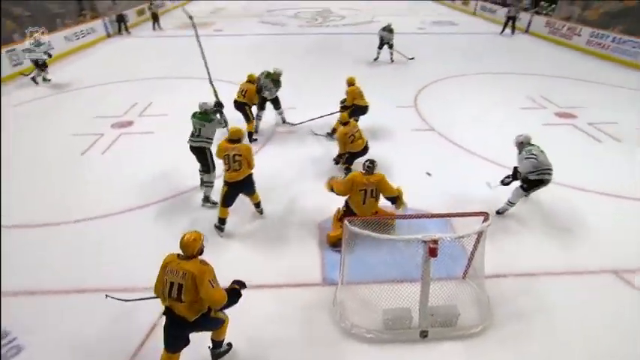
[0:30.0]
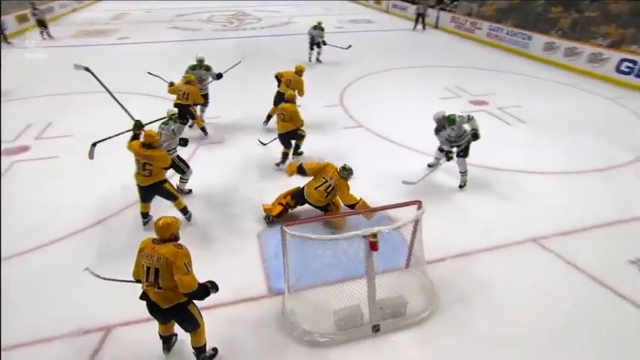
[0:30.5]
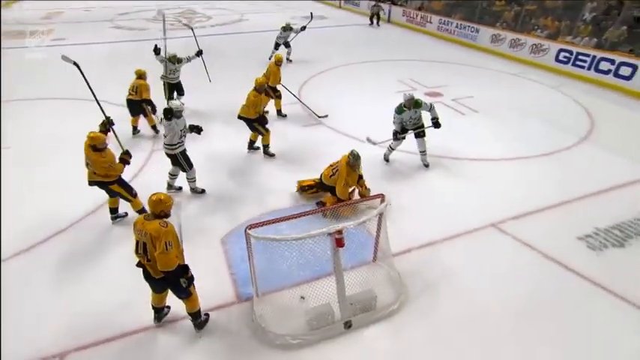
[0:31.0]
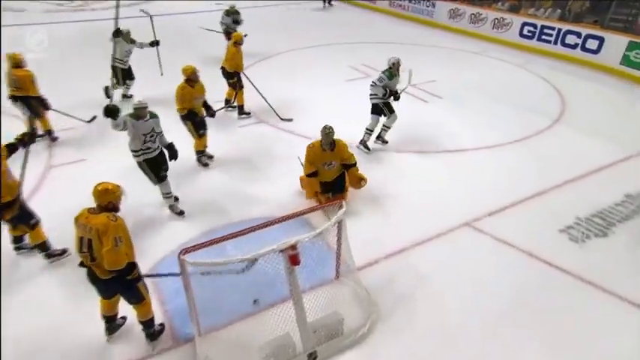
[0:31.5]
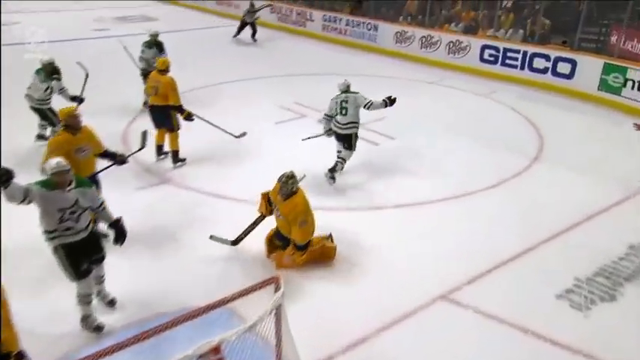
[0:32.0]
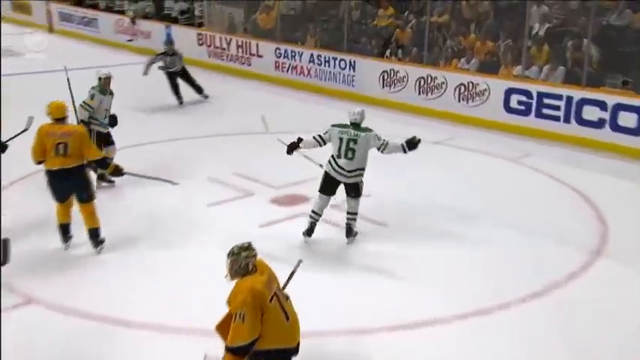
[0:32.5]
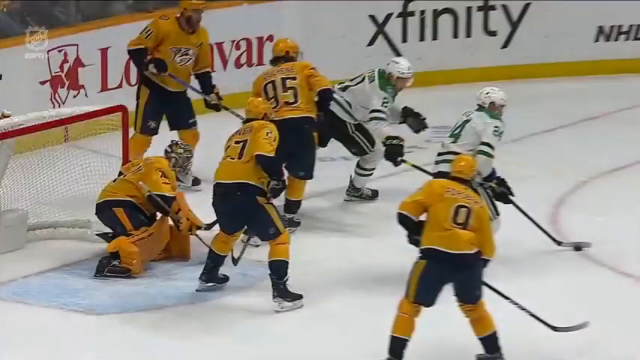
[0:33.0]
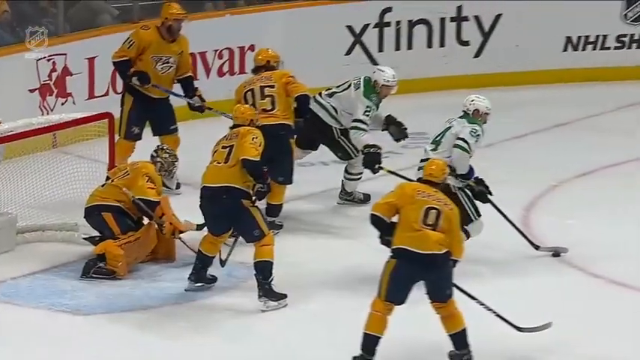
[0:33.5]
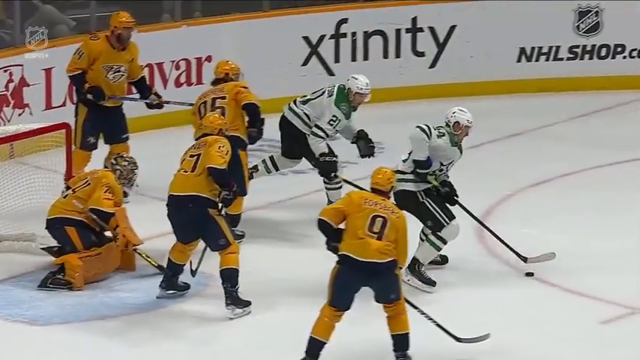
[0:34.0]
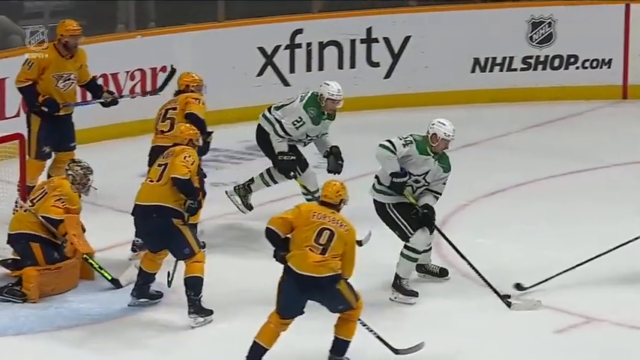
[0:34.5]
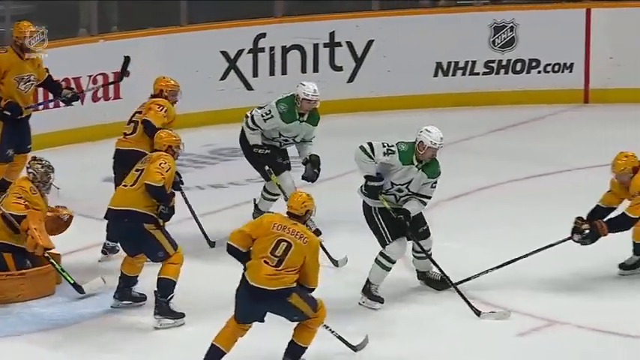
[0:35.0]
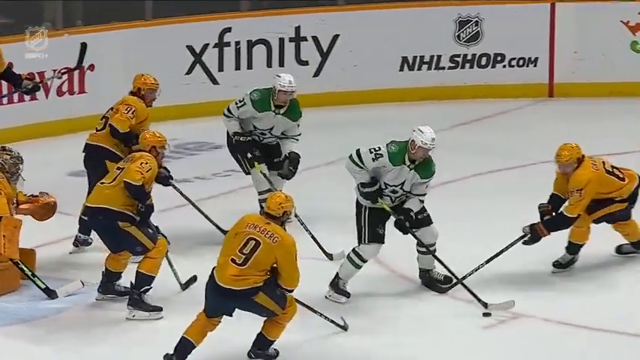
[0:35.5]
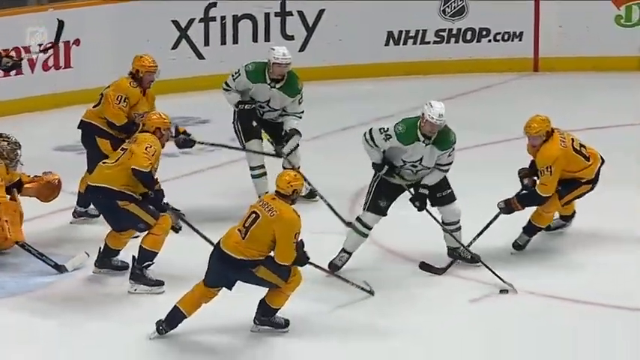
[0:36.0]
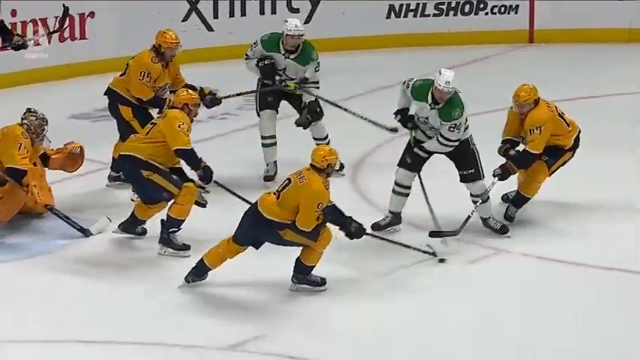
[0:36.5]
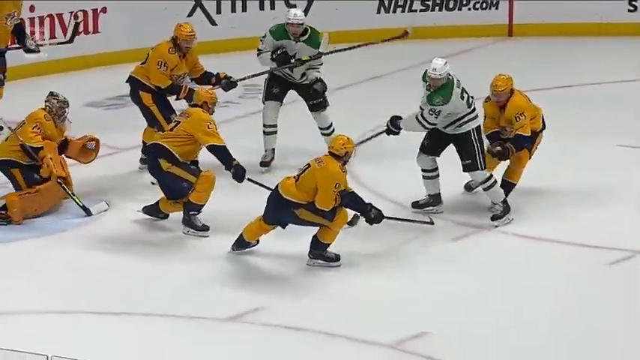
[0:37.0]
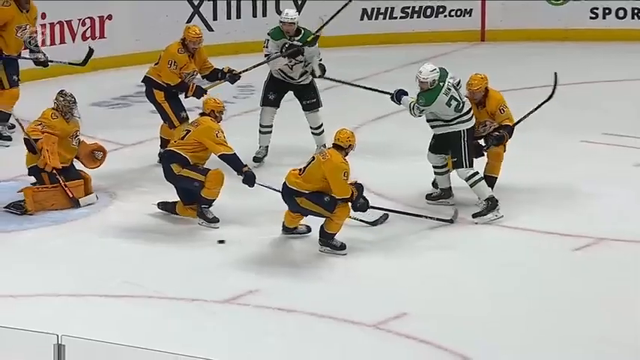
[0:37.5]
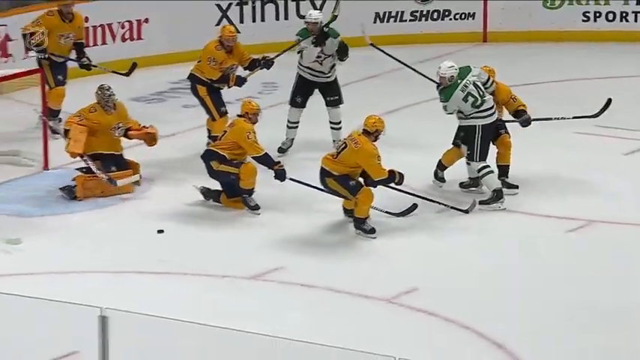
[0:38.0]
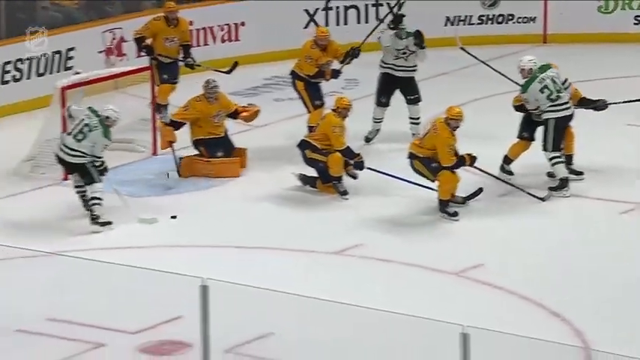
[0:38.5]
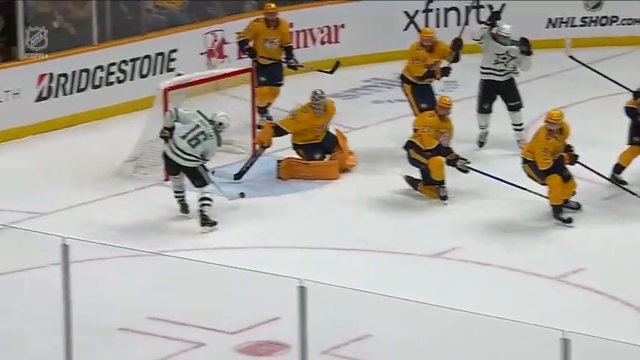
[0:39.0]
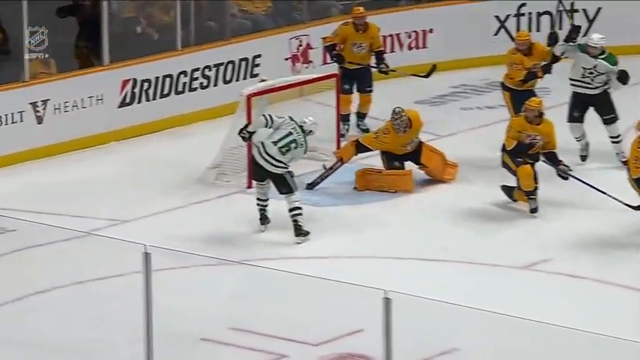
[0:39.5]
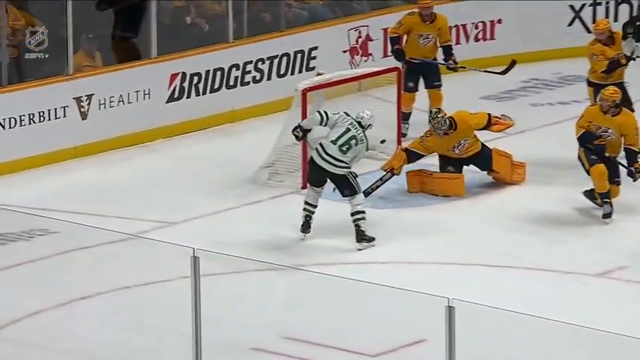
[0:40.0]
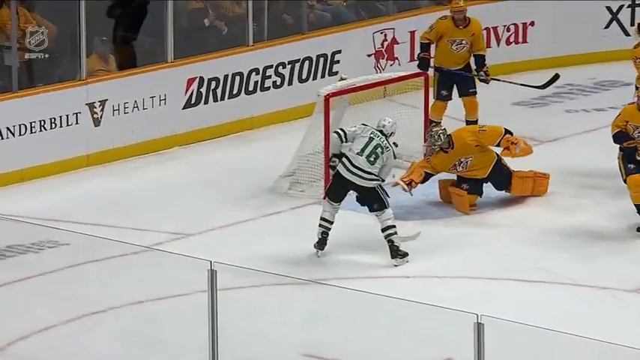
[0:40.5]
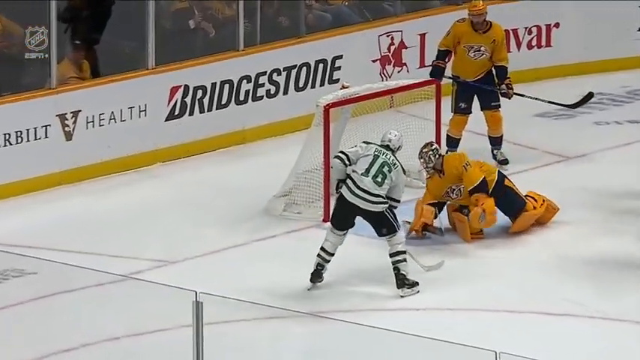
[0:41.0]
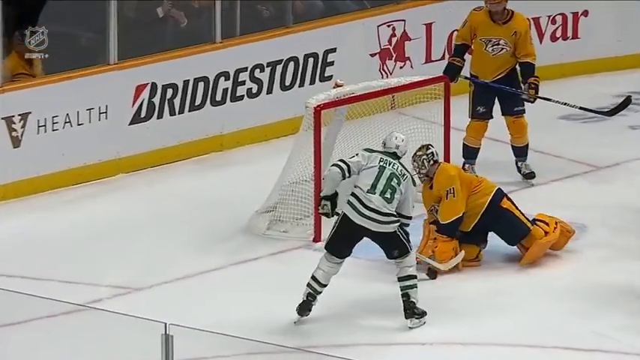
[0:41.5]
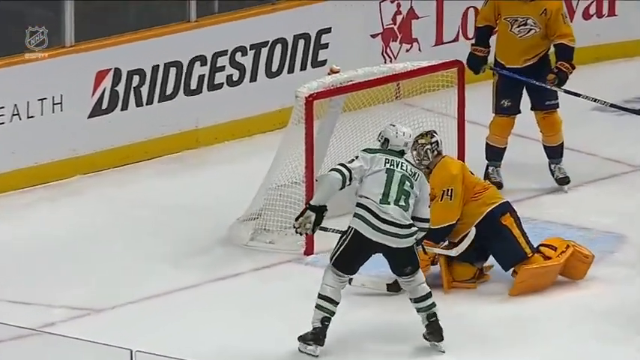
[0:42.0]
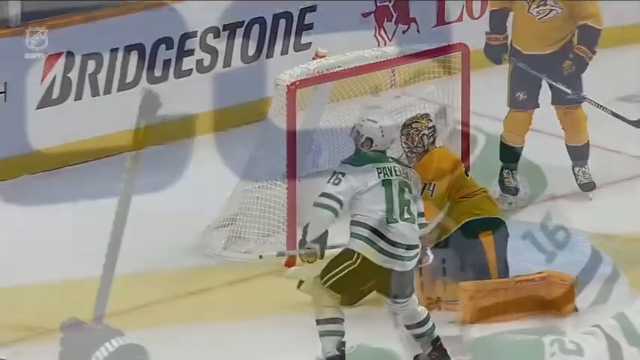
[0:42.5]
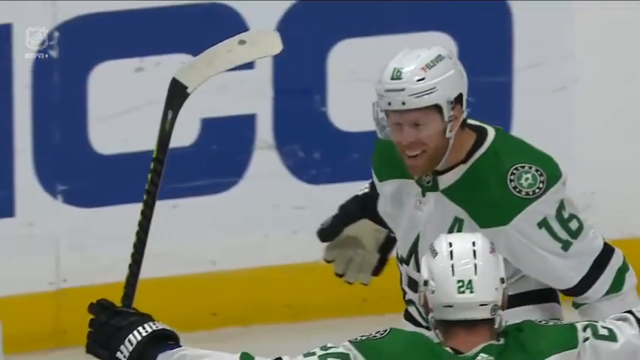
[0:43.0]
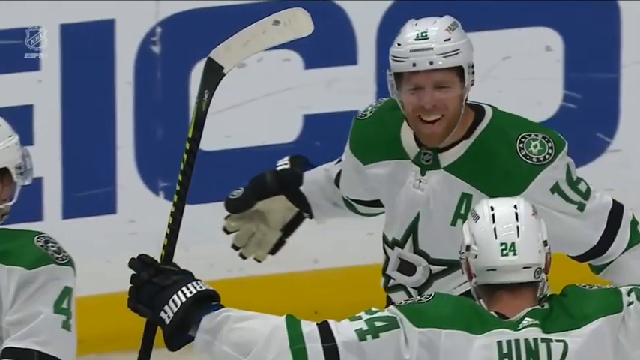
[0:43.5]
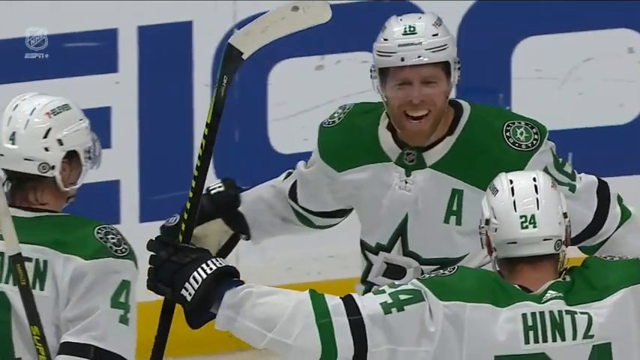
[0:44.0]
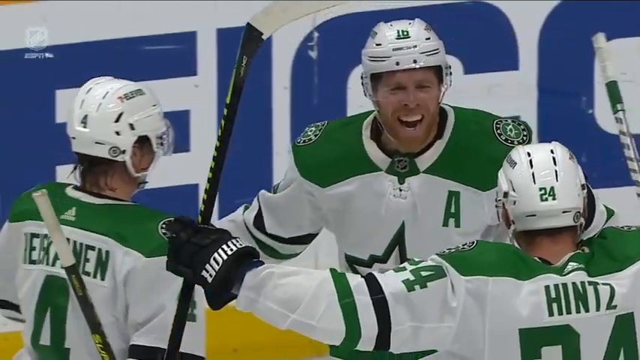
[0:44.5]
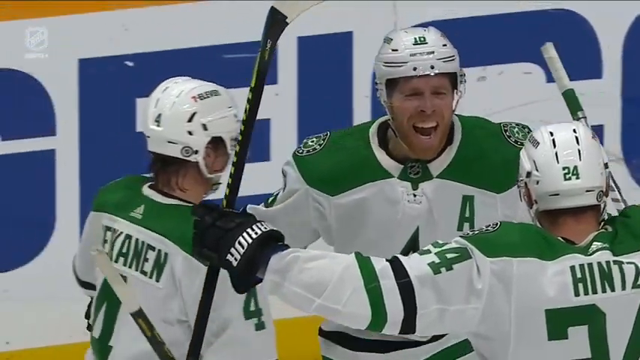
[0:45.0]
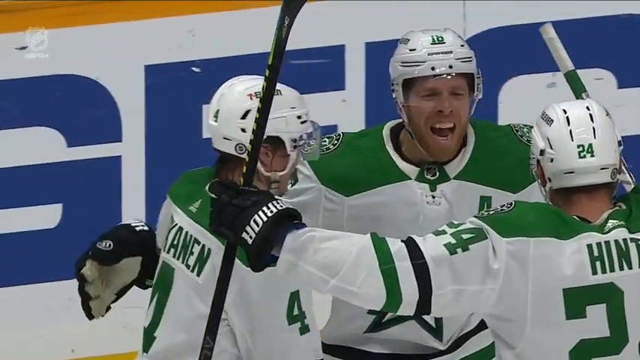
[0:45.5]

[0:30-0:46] A couple of guys are on the ice rink, either cleaning it up or horsing around.